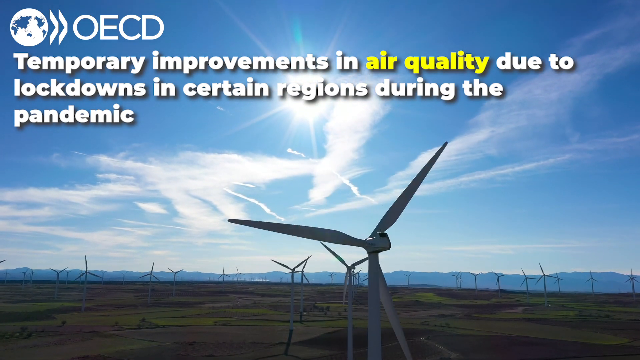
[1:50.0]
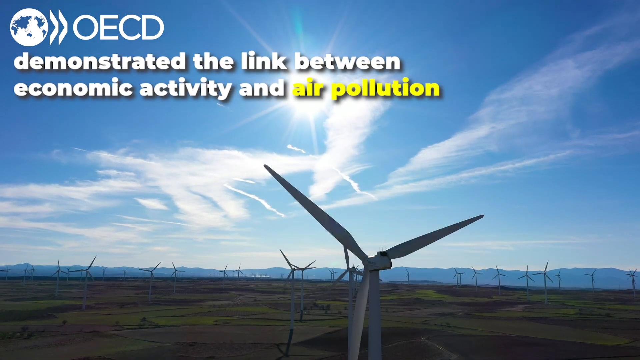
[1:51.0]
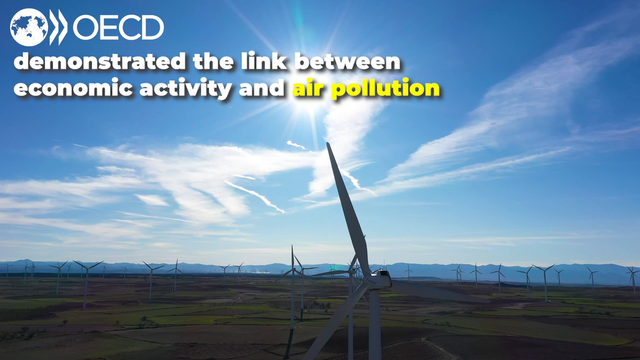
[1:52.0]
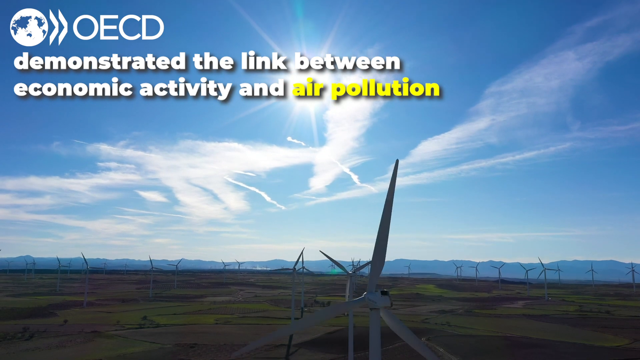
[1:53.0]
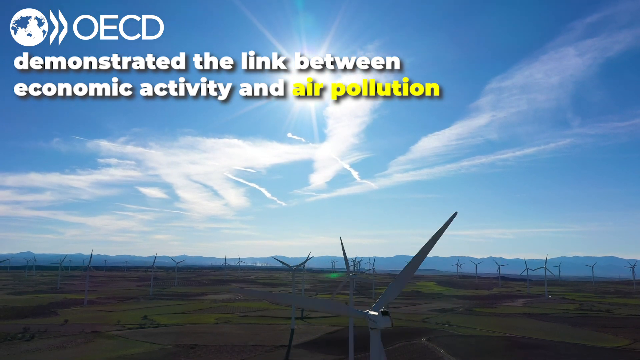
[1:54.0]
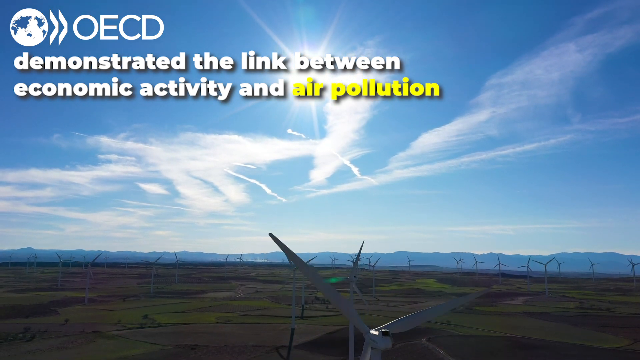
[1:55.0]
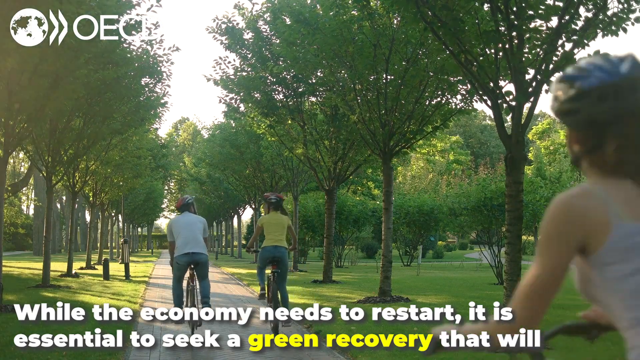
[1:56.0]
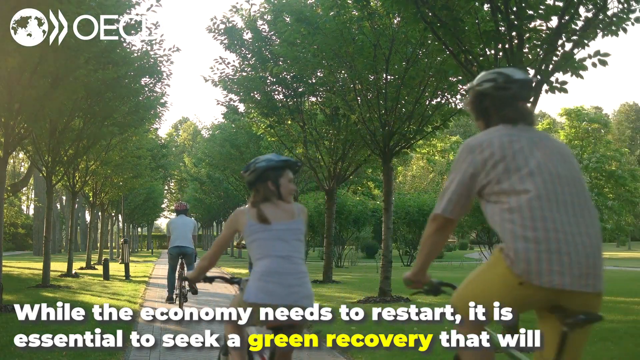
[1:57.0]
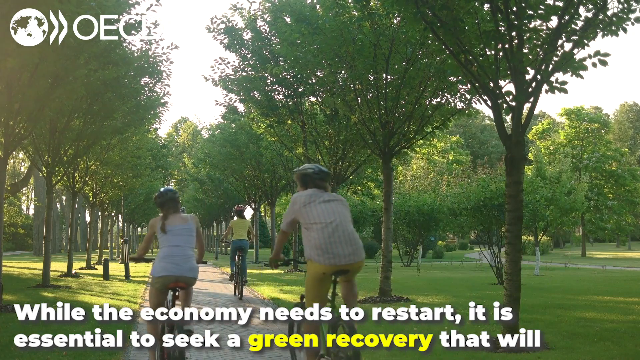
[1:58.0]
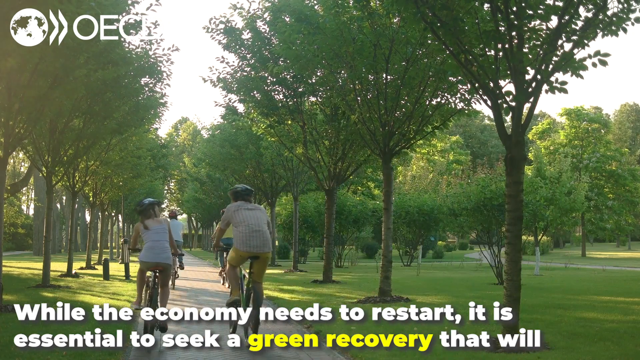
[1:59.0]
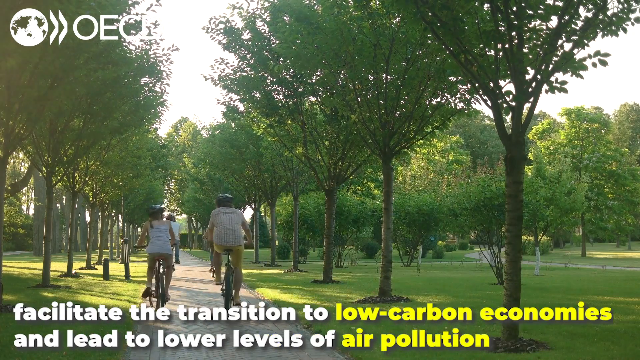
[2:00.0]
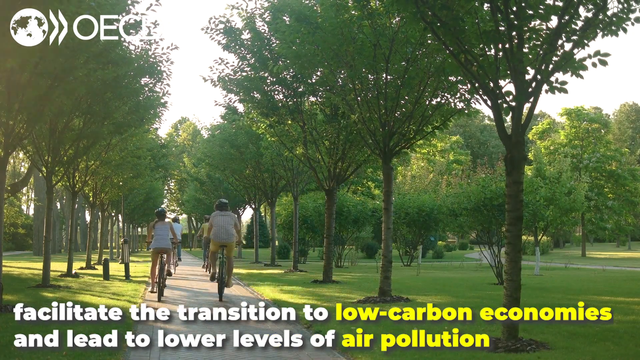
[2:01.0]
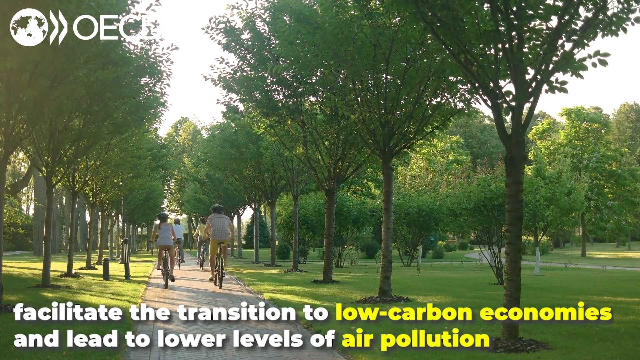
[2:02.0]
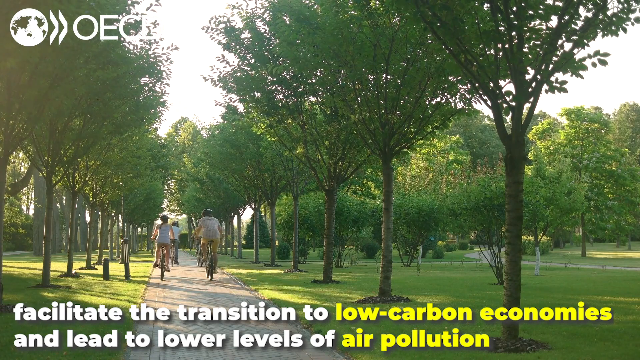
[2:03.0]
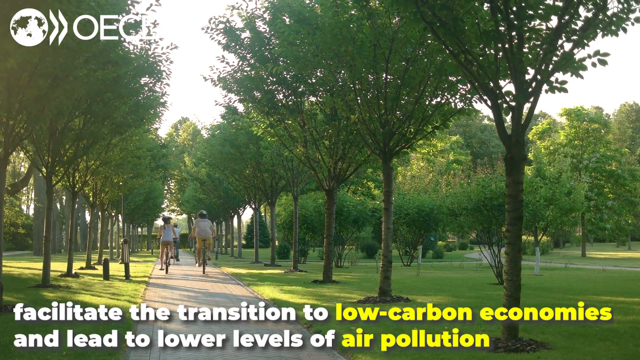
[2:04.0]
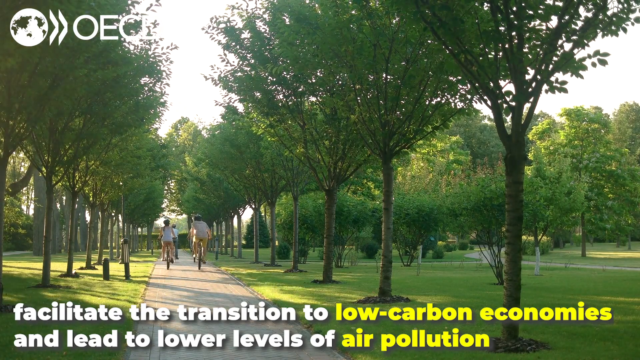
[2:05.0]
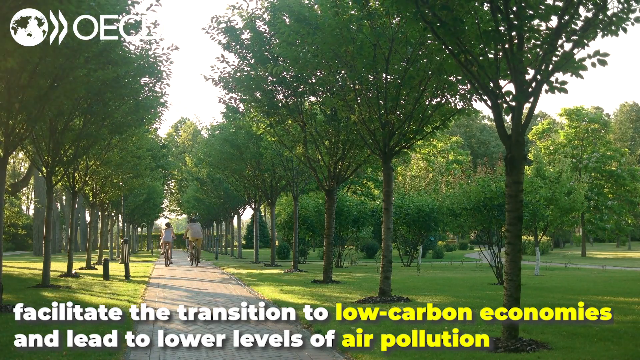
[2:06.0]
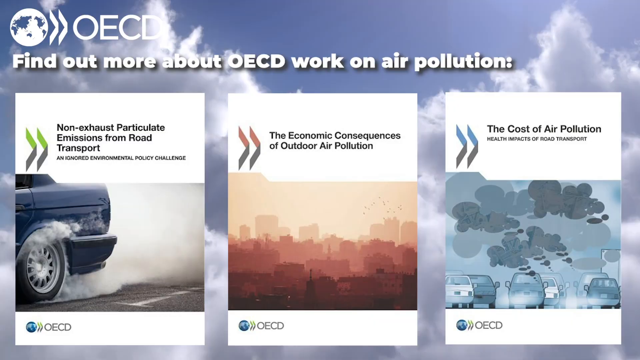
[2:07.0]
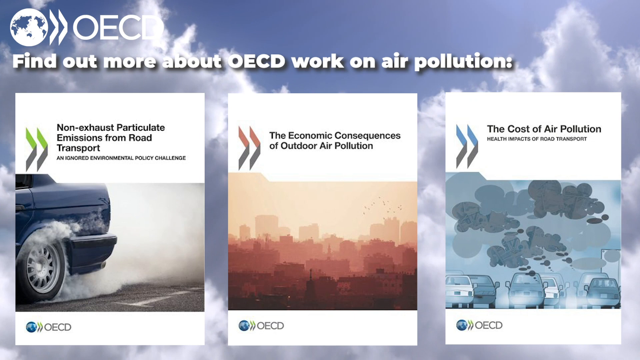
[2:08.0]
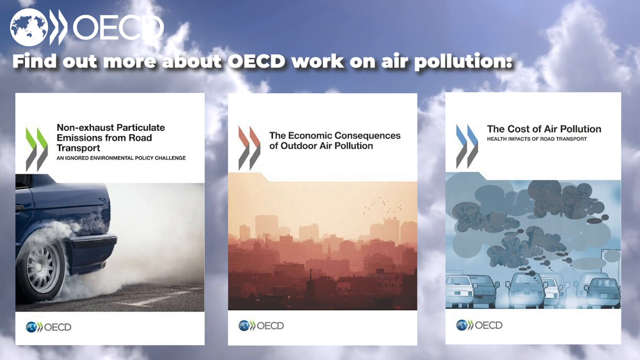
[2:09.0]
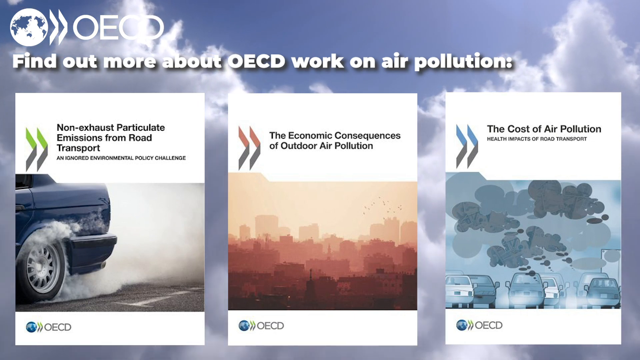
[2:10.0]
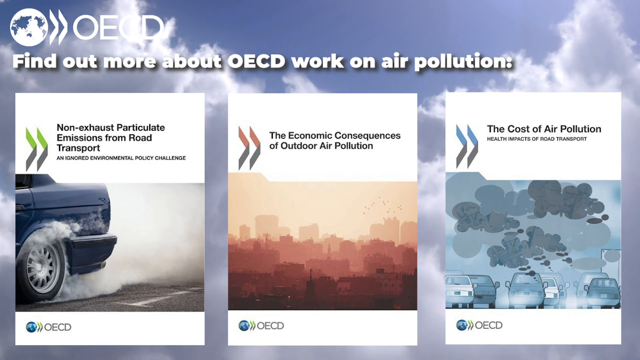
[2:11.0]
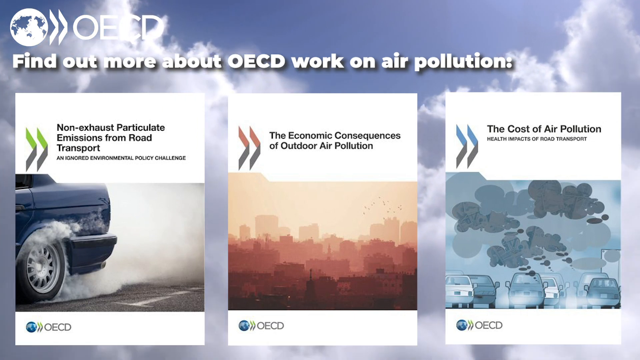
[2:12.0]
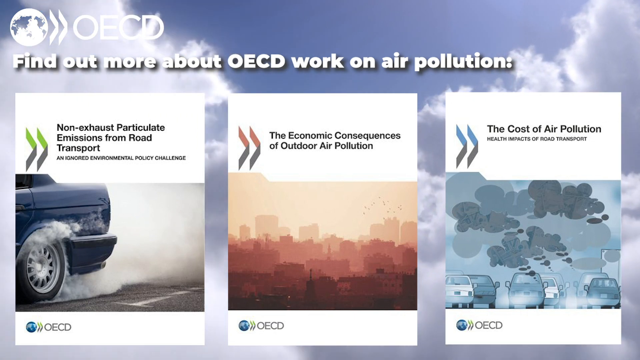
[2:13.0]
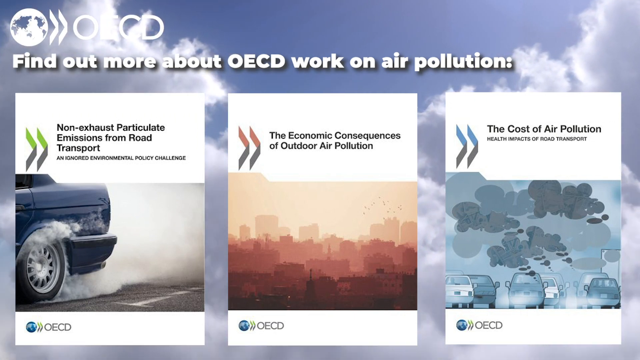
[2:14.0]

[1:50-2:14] The camera pans towards the windmills. Text at the top reads "temporary improvements in air quality due to lockdowns in certain regions during the pandemic demonstrated the link between economic activity and air pollution". The next shot is at the bottom of a pathway in what looks to be a park, with a grey path ahead and trees lined up parallel to each other along it on a sunny day. Four cyclists, two in front and two at the back, come from the right side of the camera, ride off down the path into the distance and disappear at the end of the path. Next, three different images are shown, with text at the top reading "find out more about OECD work on air pollution". The left graphic shows a car with a smoking tyre, viewed from the back left side. The middle graphic shows a city skyline, quite dark in the part closest and lighter and more blurred further away. The right graphic, in a cartoon style, shows cars in a traffic jam with pollution above them represented by clouds in different shades of grey. In the background is a moving scene of clouds on a blue sky.